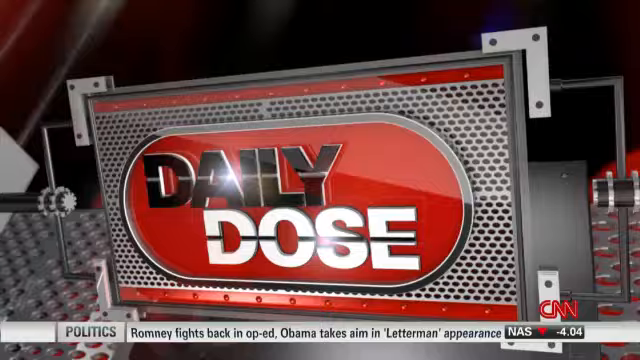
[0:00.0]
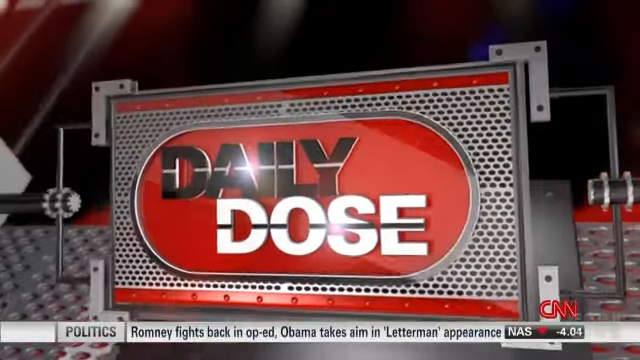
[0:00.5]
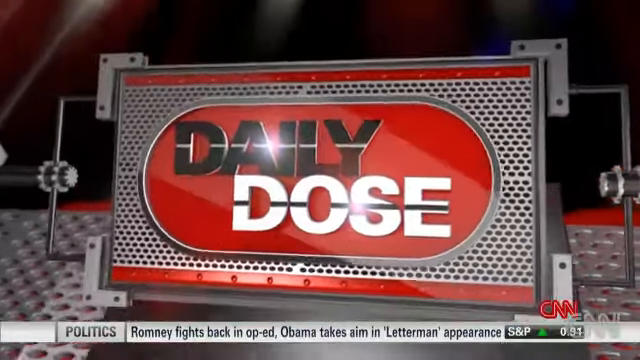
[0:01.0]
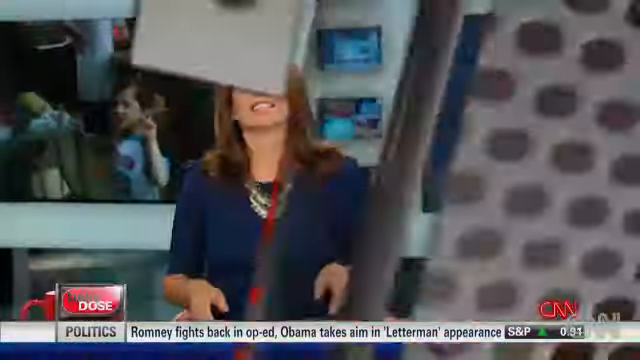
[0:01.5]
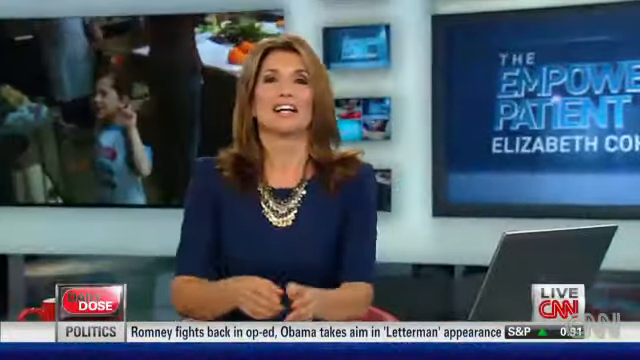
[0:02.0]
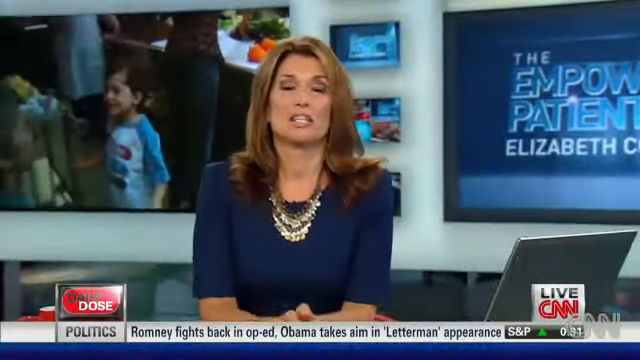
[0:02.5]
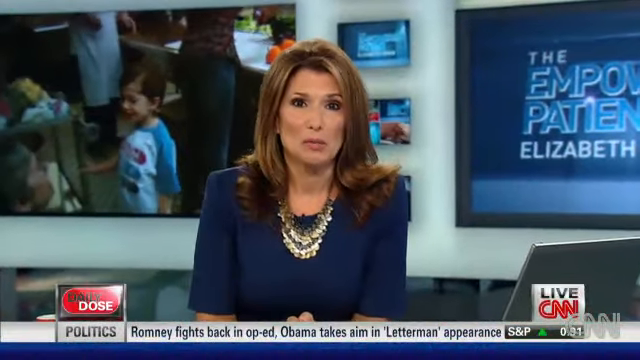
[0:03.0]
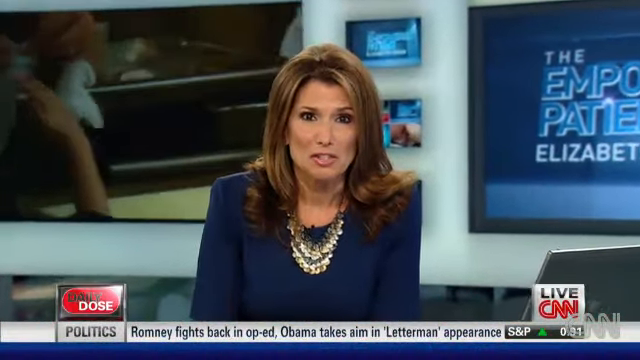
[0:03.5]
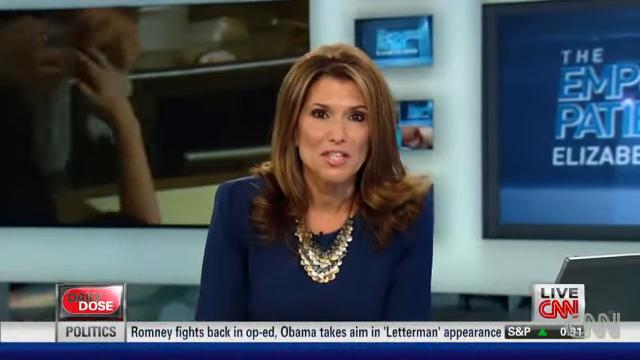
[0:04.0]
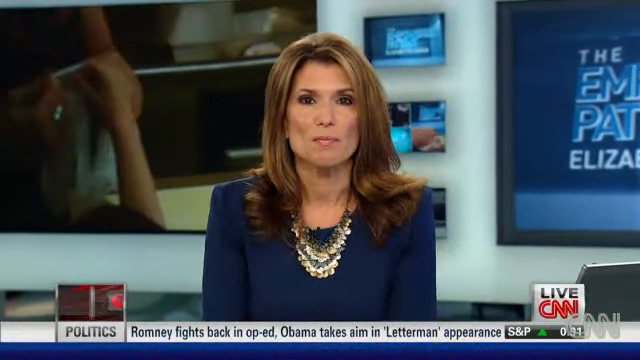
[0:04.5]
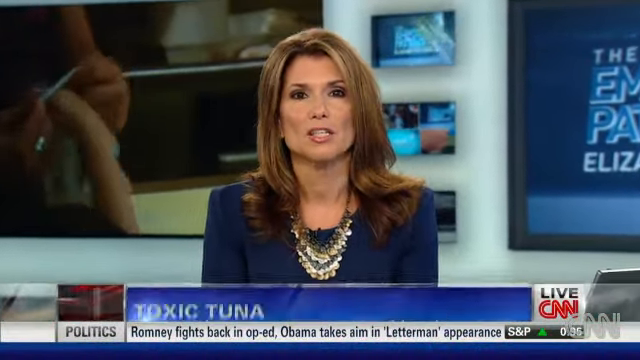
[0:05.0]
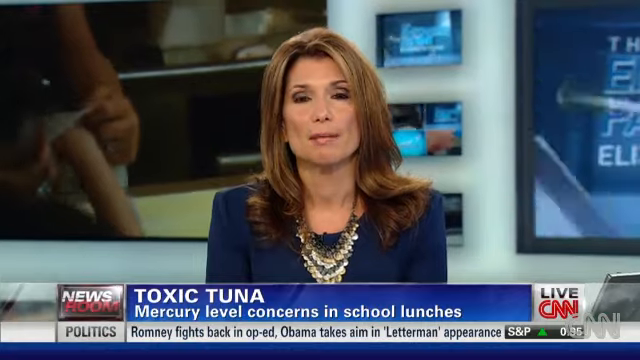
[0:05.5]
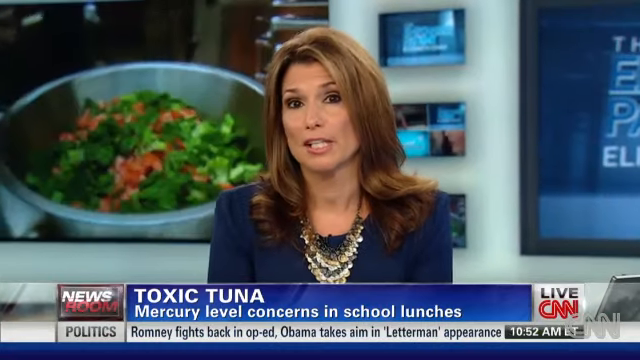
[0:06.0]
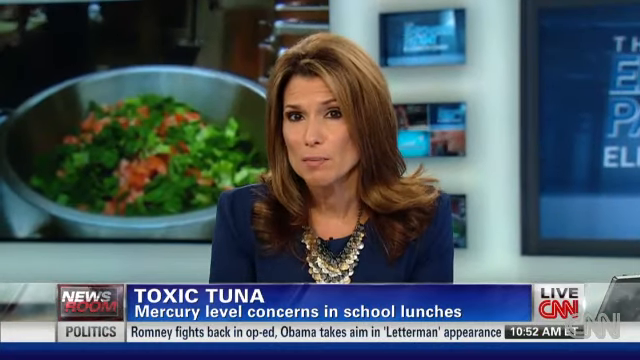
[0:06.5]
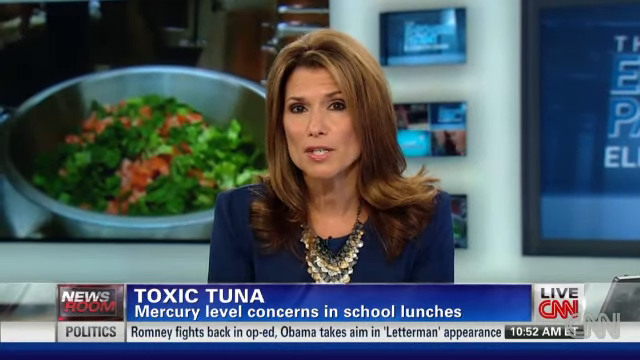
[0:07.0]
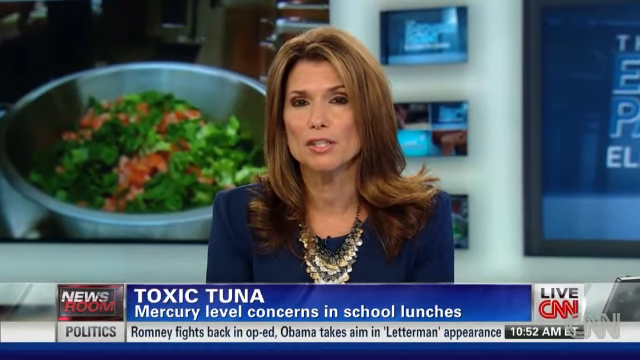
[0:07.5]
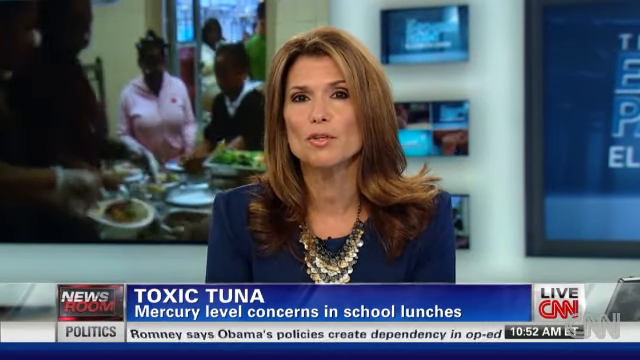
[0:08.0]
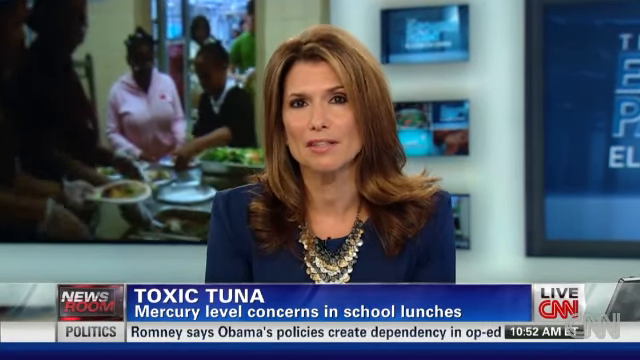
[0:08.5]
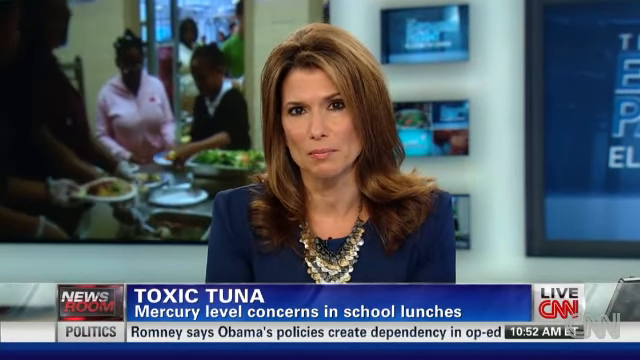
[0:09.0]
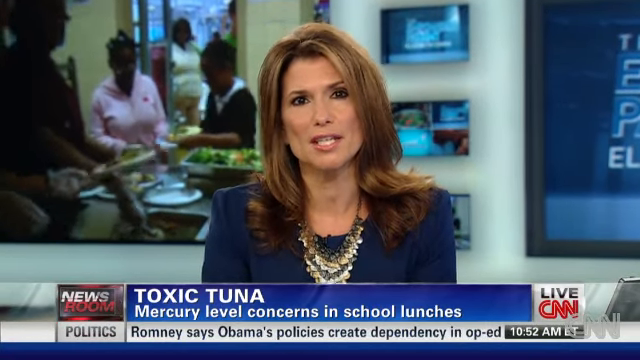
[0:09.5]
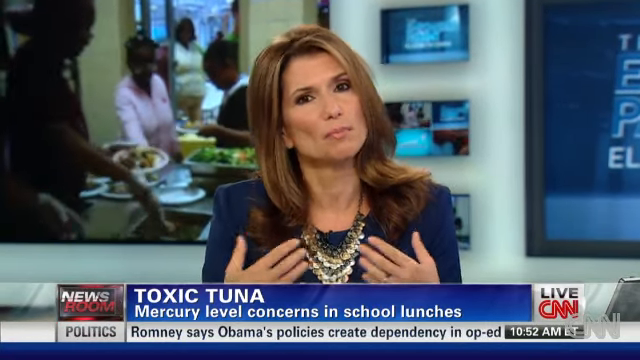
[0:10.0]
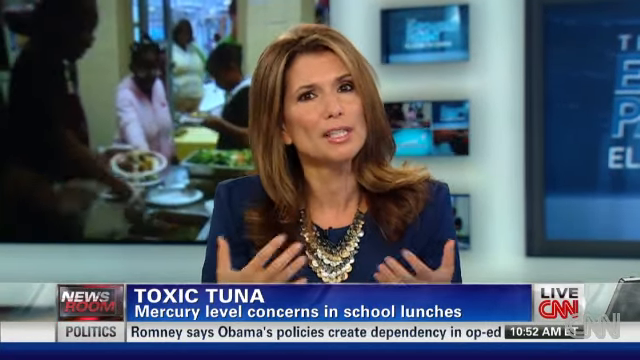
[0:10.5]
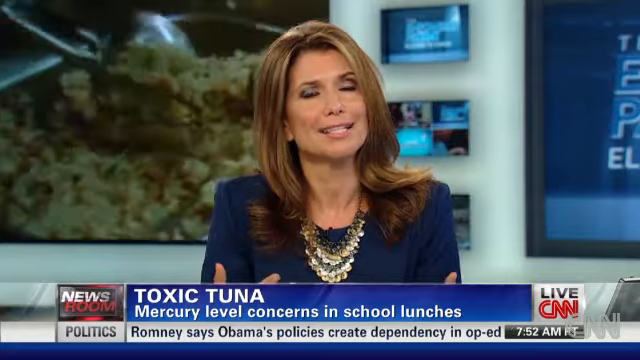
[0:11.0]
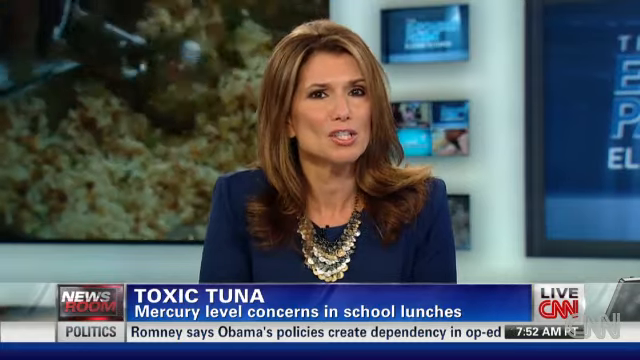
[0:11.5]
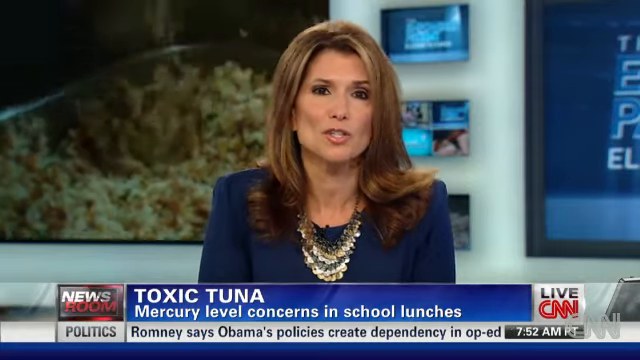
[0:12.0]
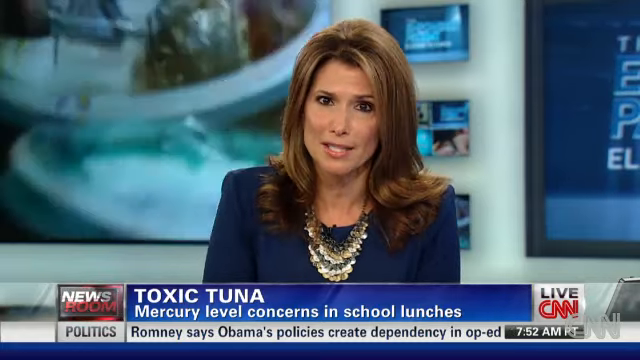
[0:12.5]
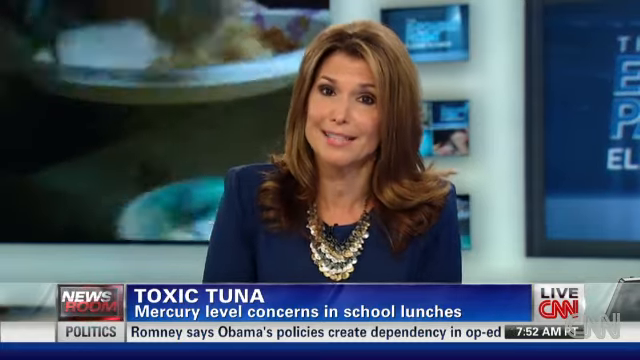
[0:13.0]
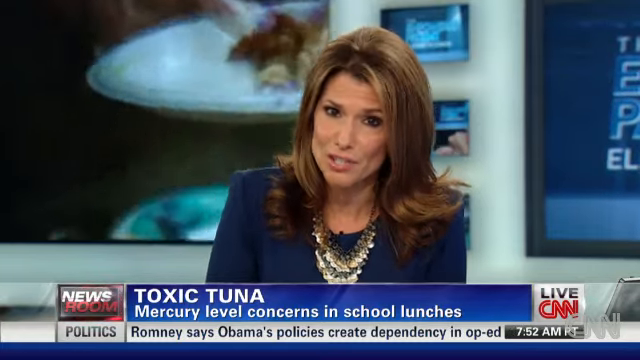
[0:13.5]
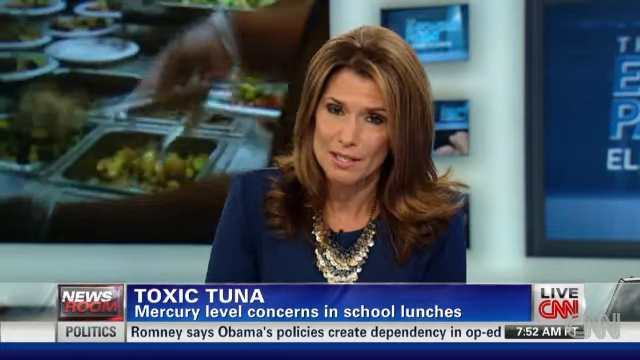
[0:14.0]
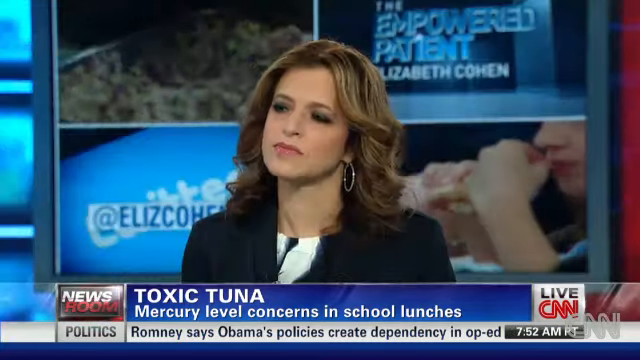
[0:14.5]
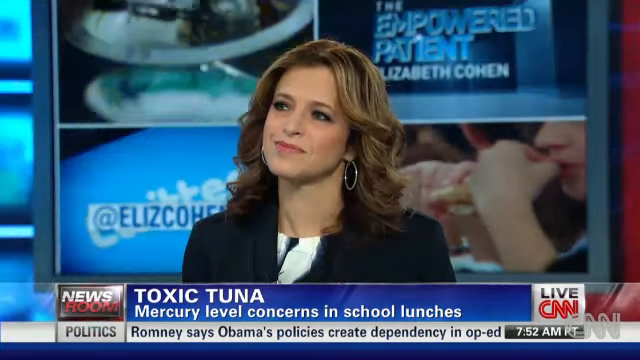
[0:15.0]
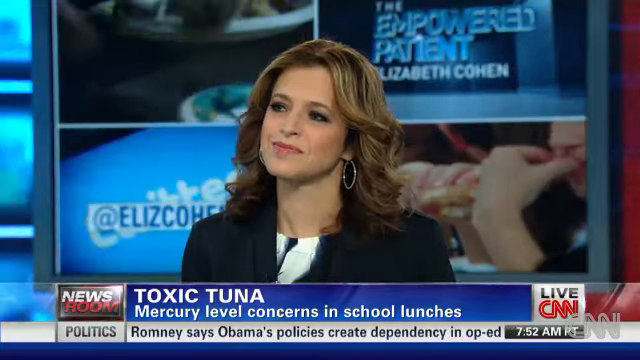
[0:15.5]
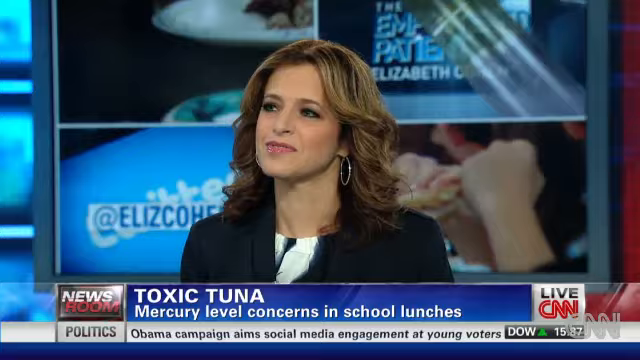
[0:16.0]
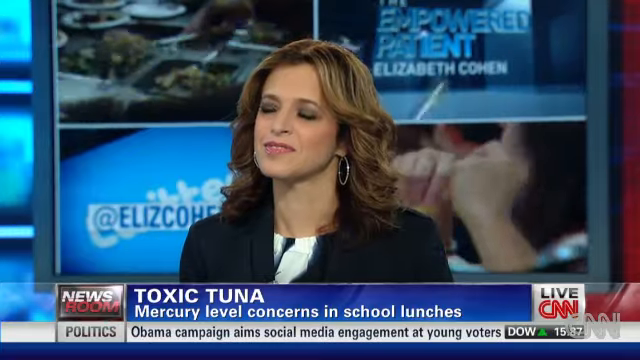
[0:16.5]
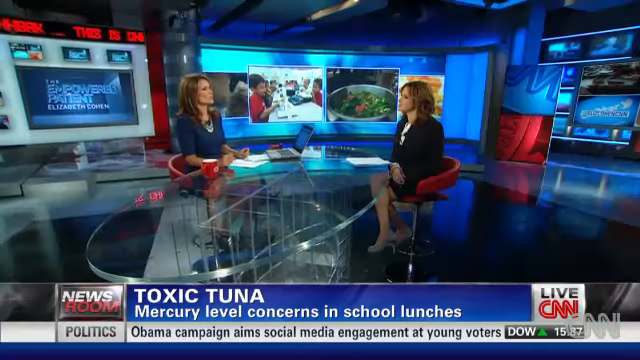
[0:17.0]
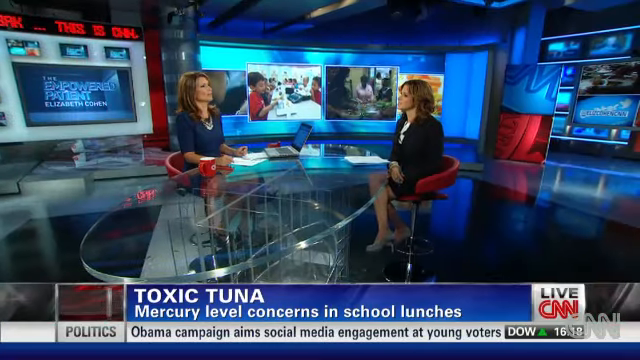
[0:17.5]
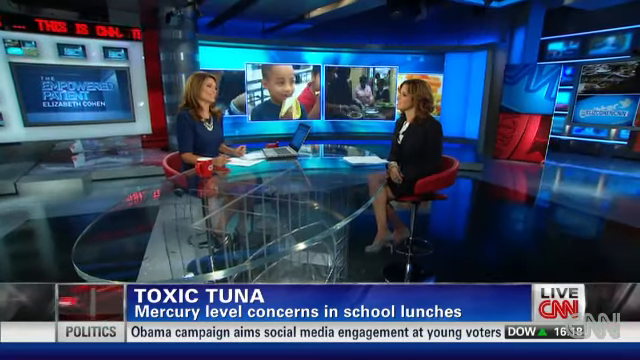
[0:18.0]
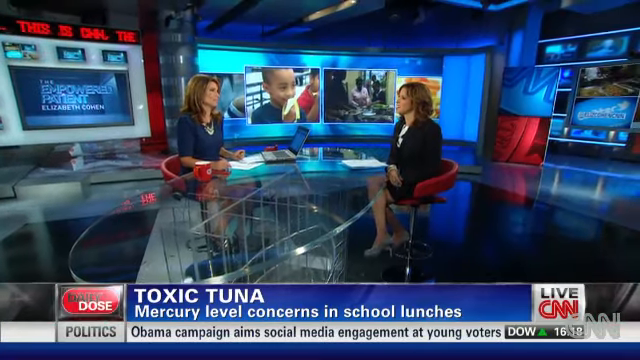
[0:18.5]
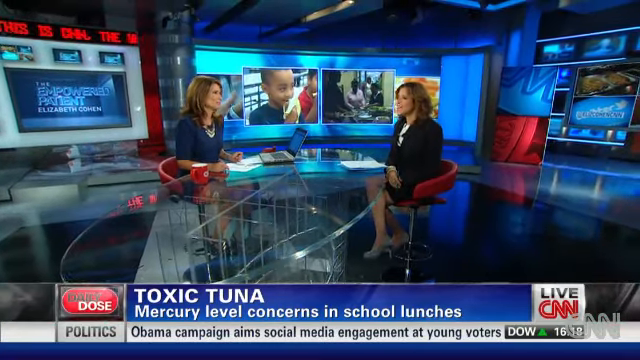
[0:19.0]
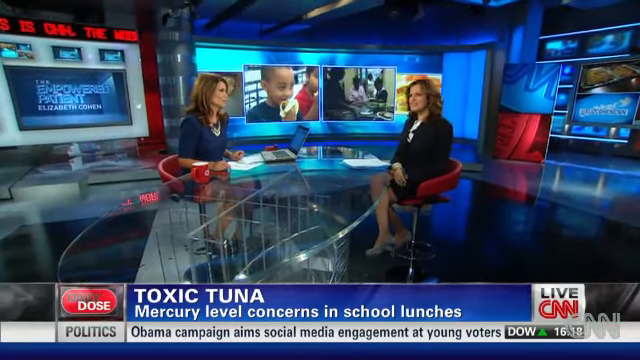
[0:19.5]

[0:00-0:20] Something called "daily dose" appears; it looks like a clip show of sorts, apparently on CNN. Next, "toxic tuna mercury level concerns in school lunches" appears. This looks to be a much older CNN clip, and the screen looks very busy. A picture of salad with a lot of tuna is shown behind. A woman in a blue suit with good hair is speaking; her name seems to be Elizabeth Cohen, and her segment looks like it has something to do with empowerment. She apparently has a guest who is also talking, a woman who looks like a well-versed expert.